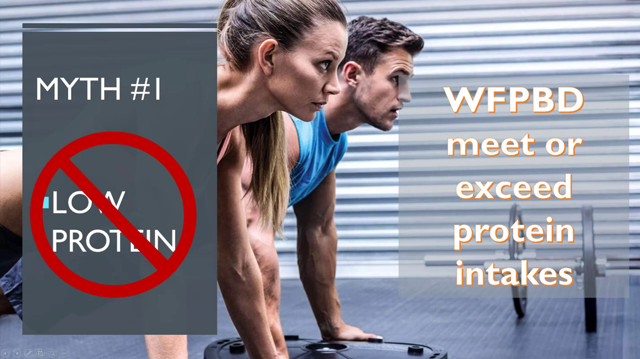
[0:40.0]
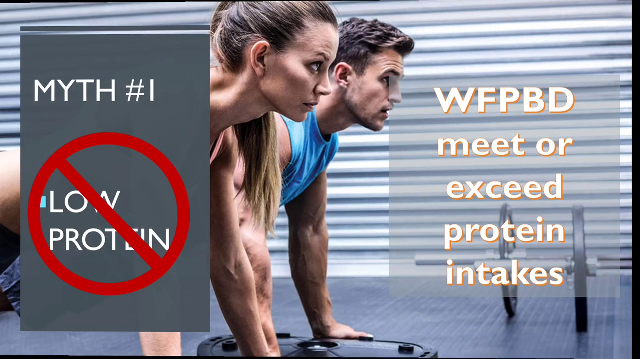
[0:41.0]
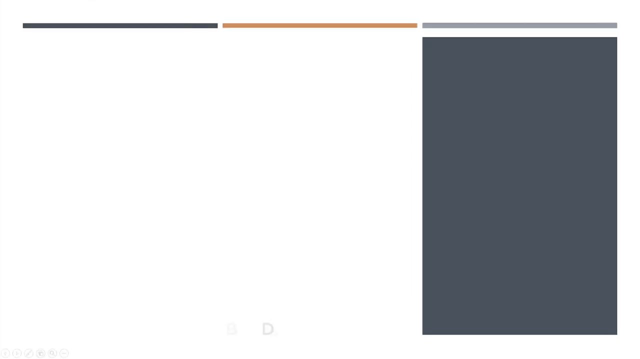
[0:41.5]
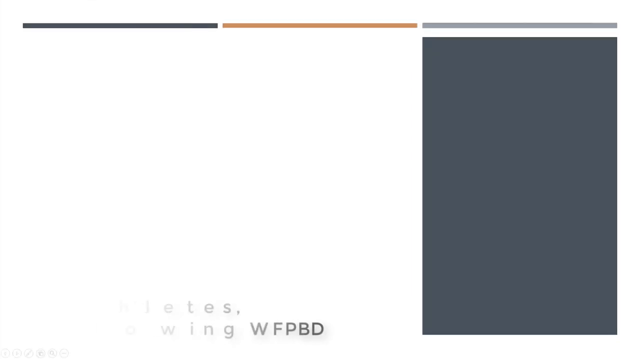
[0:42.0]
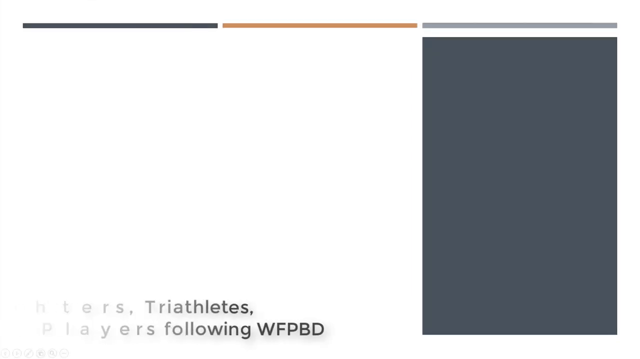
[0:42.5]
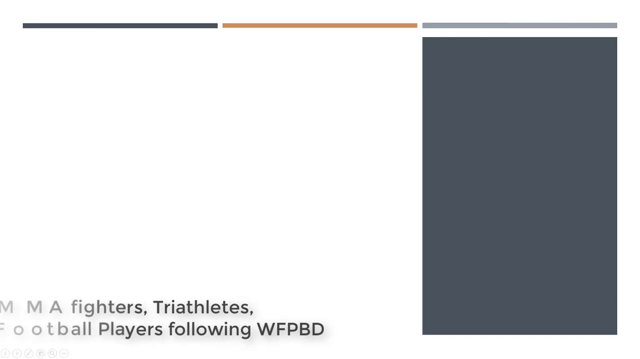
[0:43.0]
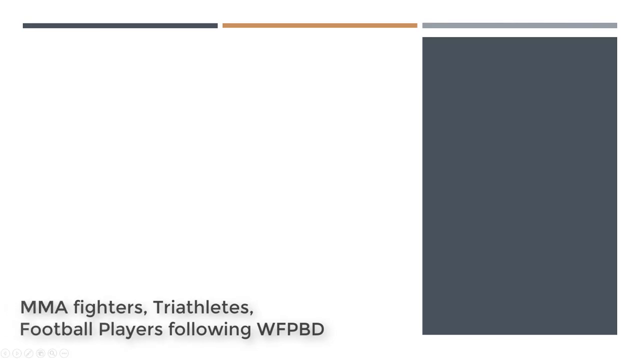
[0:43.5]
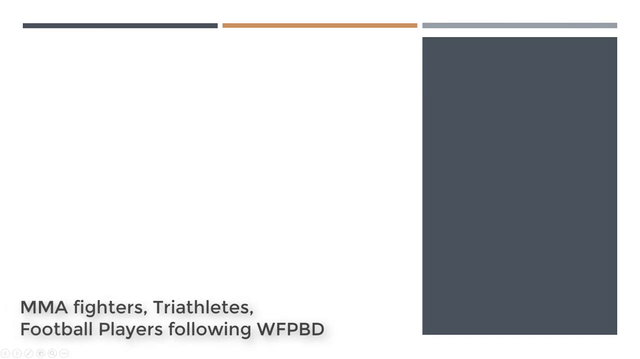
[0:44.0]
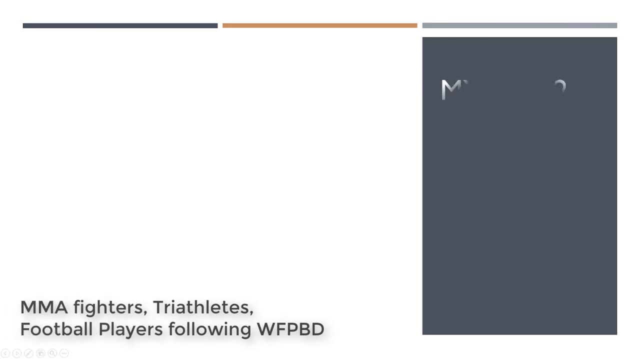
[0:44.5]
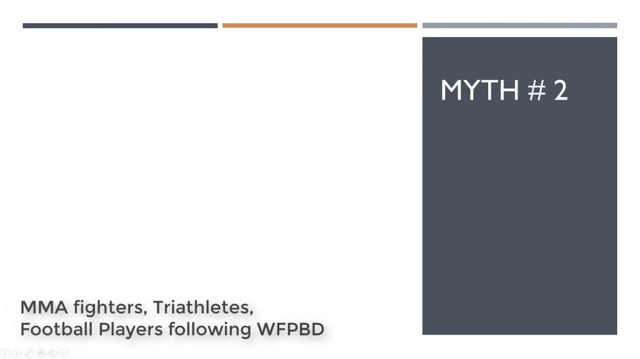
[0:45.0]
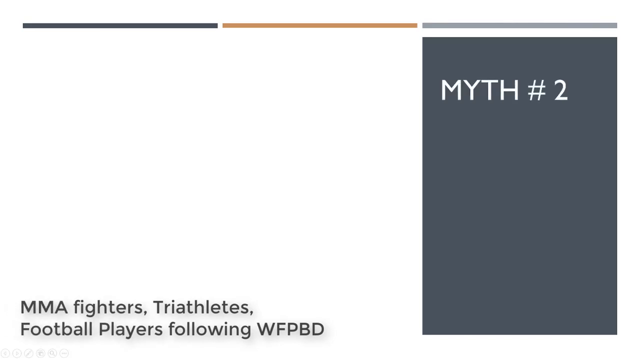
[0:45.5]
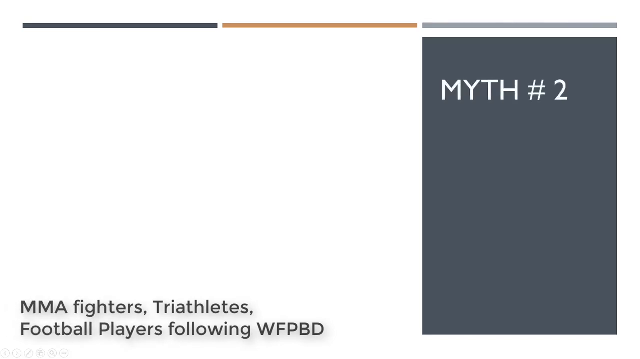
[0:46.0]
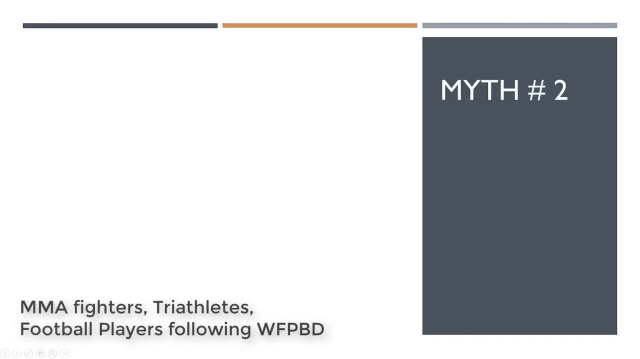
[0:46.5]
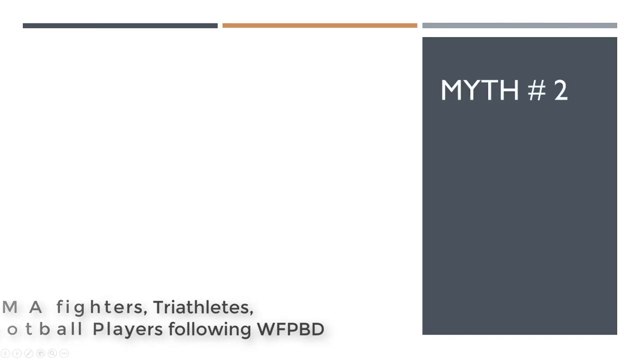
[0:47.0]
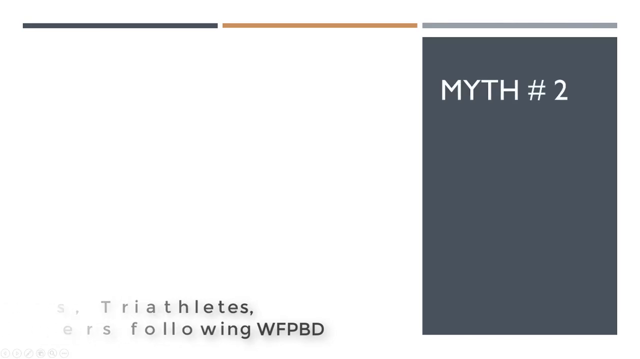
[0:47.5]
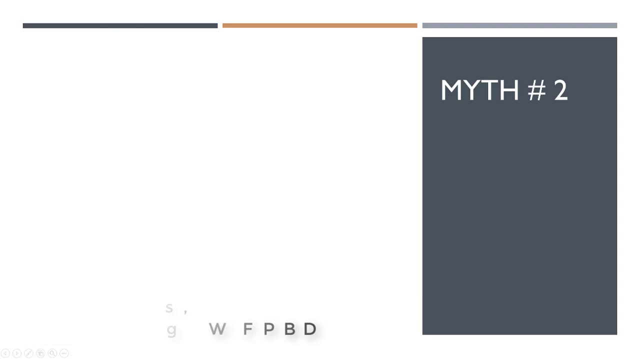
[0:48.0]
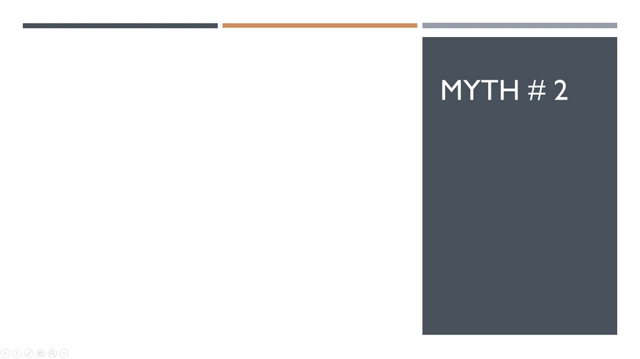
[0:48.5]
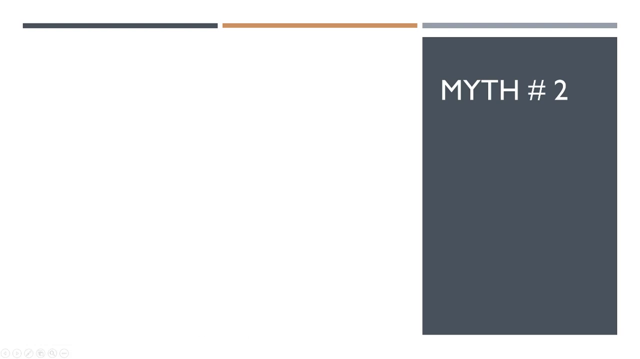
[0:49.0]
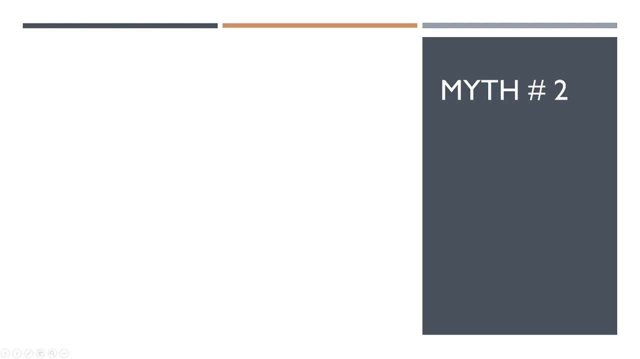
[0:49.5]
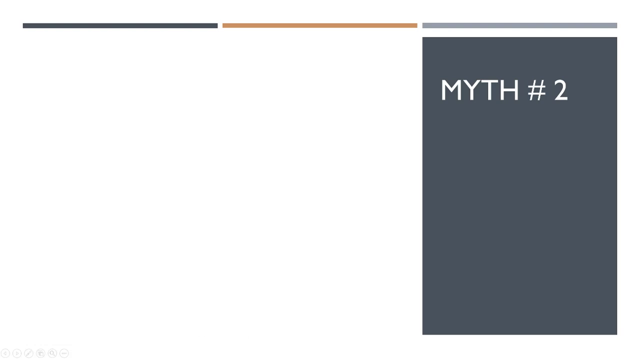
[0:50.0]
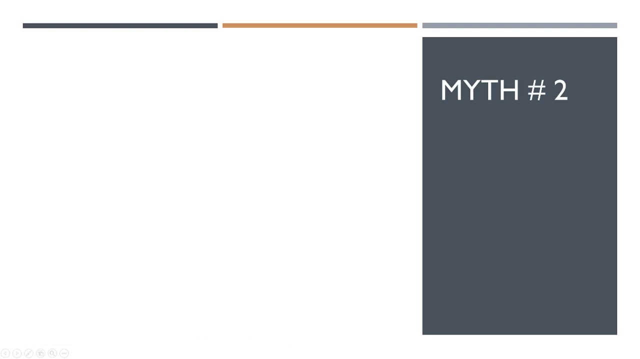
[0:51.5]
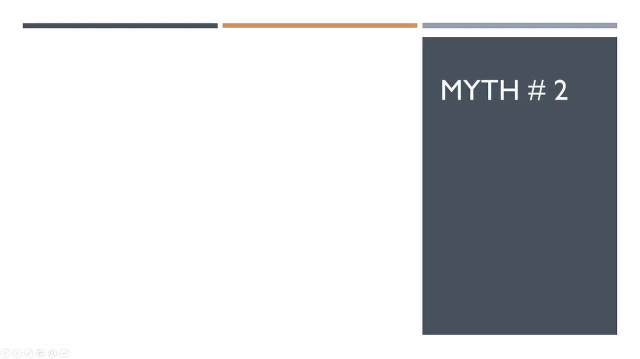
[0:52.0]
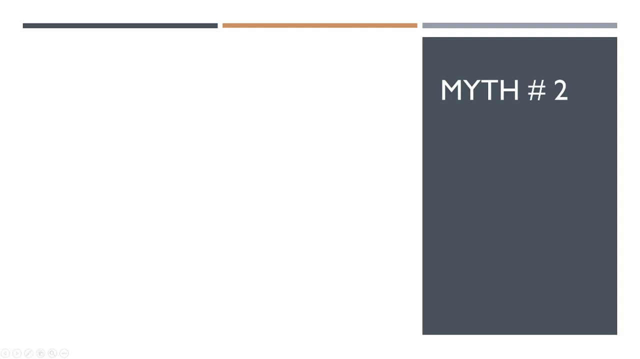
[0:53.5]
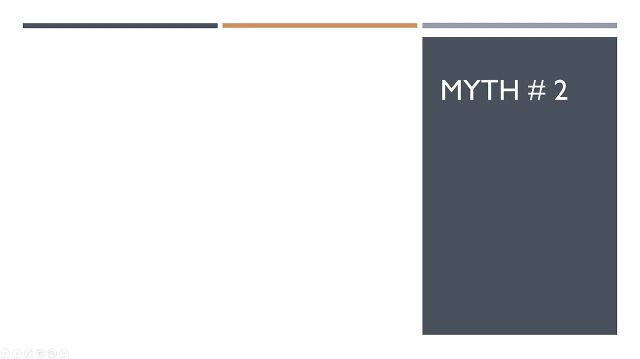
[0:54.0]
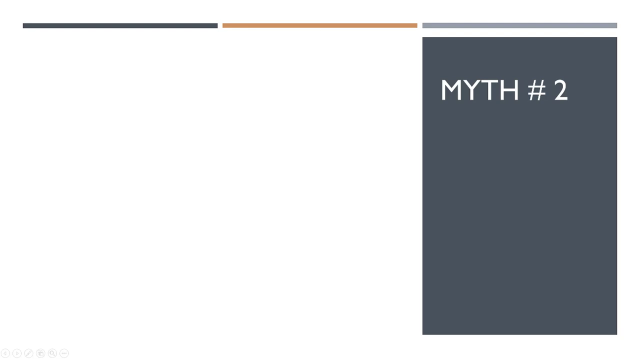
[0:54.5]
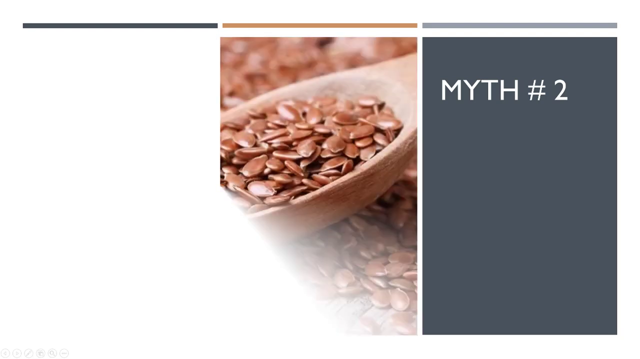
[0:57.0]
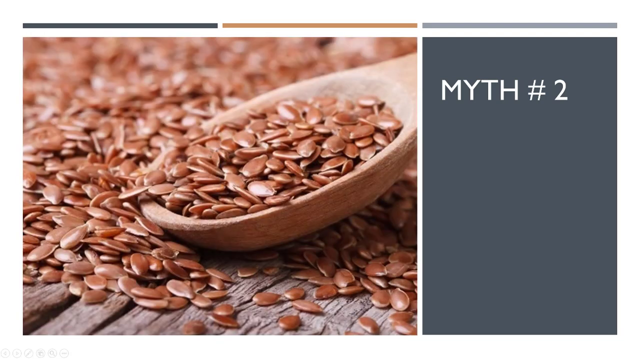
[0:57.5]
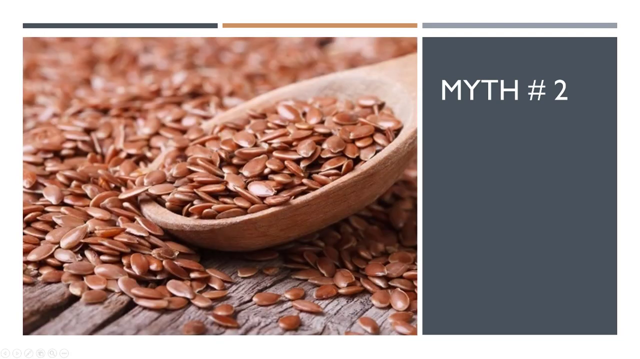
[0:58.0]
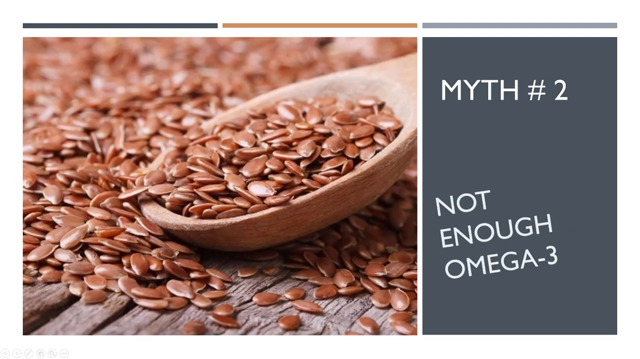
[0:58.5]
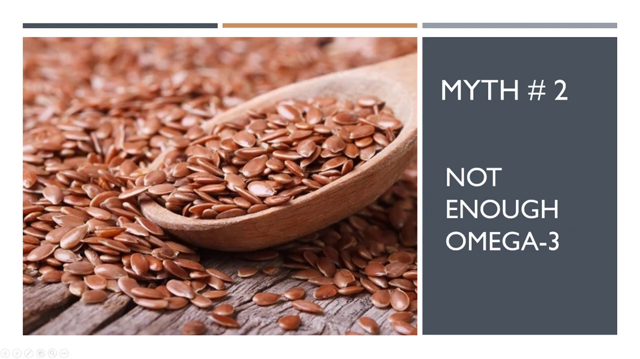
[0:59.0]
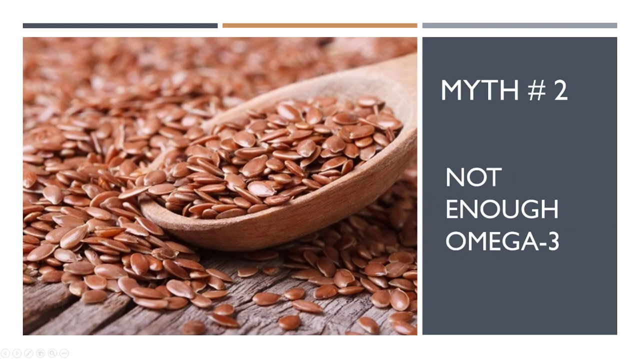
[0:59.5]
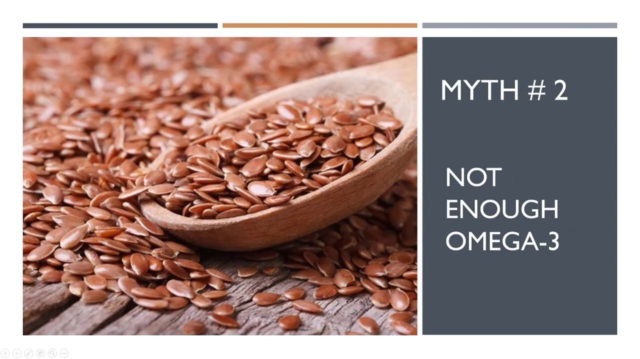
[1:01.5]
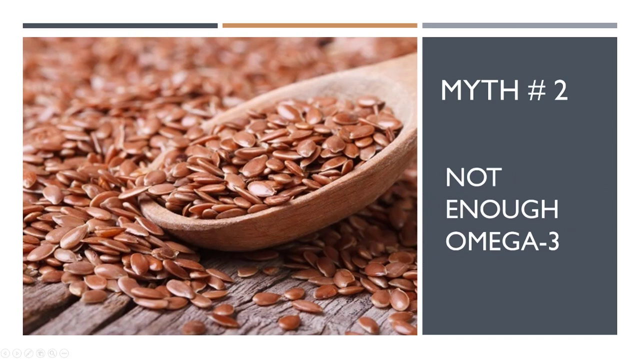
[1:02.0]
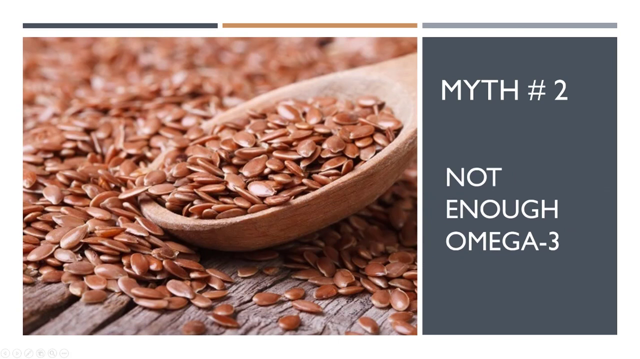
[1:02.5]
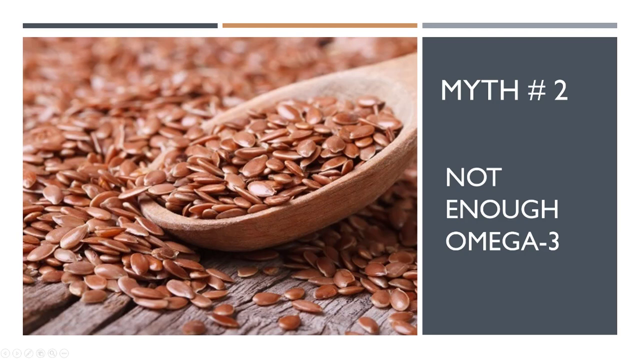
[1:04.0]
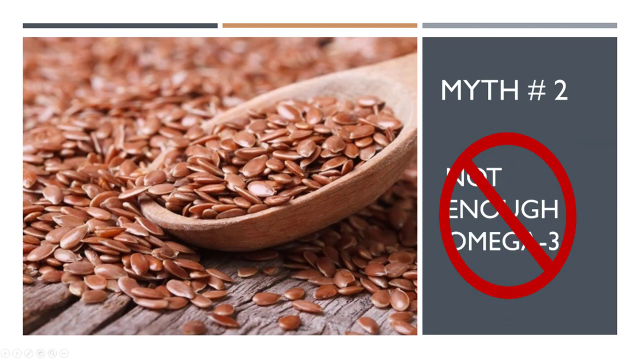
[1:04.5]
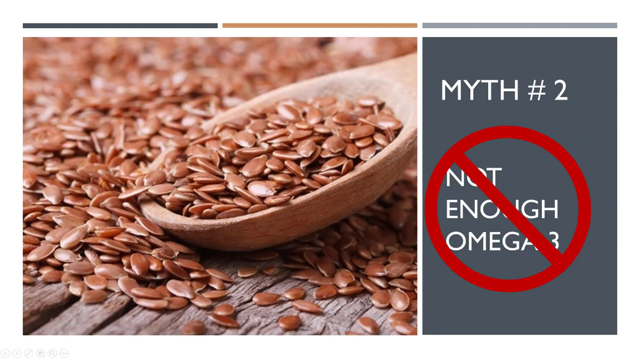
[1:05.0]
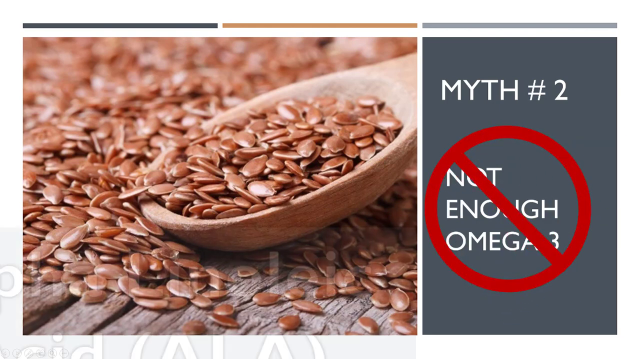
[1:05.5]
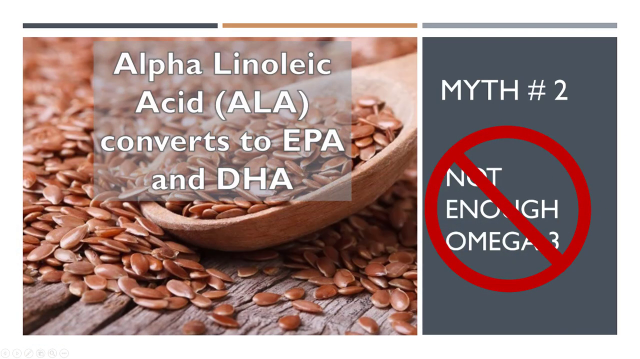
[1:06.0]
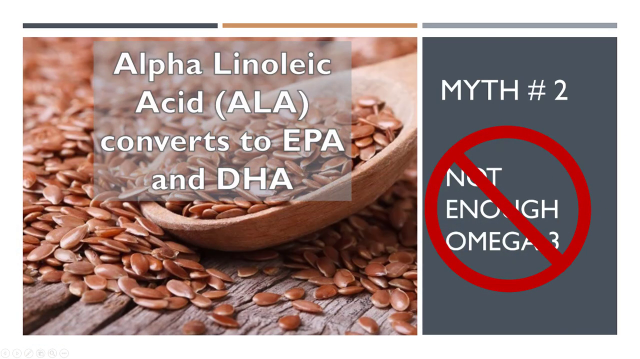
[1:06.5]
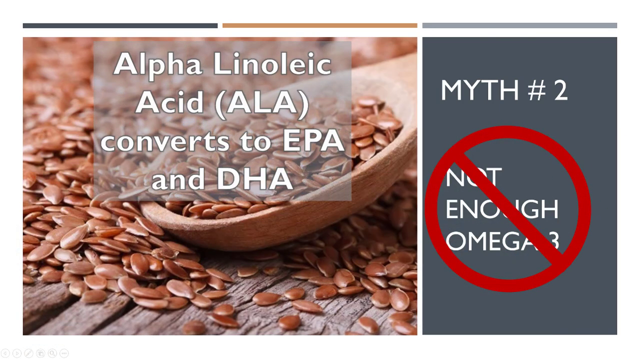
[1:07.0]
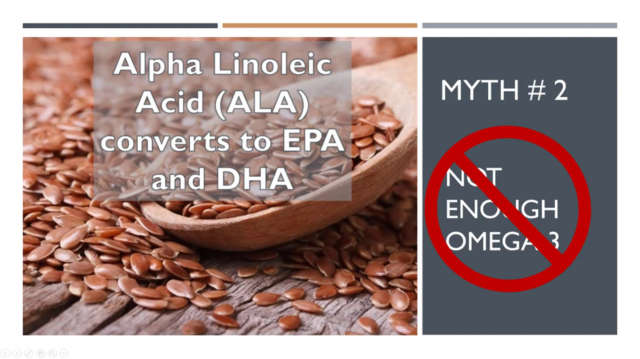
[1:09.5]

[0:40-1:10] A transition gives the appearance of a 3D cube being rotated to the right. Another bullet point appears with text at the bottom left reading "MMA fighters, triathletes, football players following WFPBD," which then fades out, followed by "myth number two" at the top right. Another transition reveals a picture of beans being scooped up on a table with a wooden spoon; the spoon is near full capacity. Text pops up reading "not enough omega-3," and the circle with a line through it appears to cross the text out as another block of text is revealed: "alpha-linoleic acid, ALA, converts to EPA and DHA." The video is in a PowerPoint-style presentation with a simple color palette of bright white and steel blue, with pale yellow colors over top and underneath.